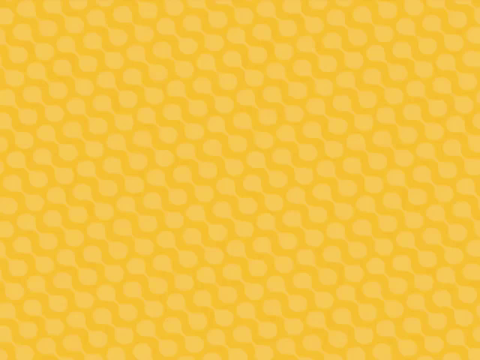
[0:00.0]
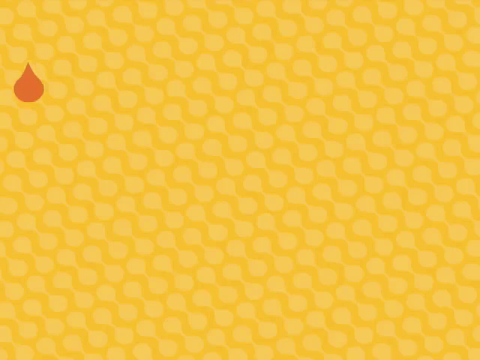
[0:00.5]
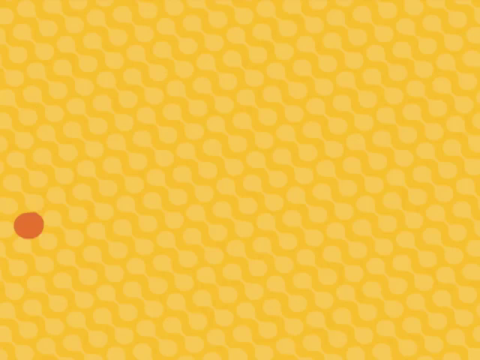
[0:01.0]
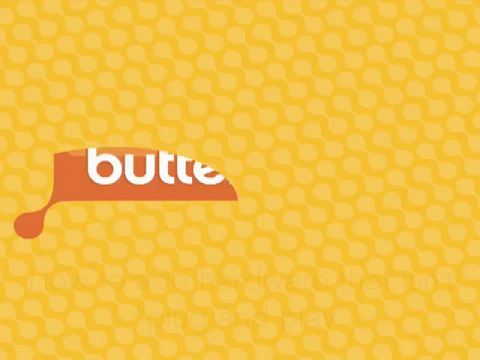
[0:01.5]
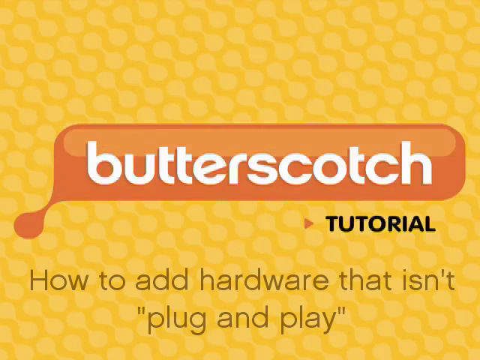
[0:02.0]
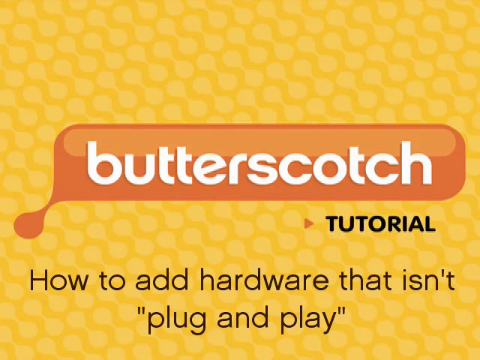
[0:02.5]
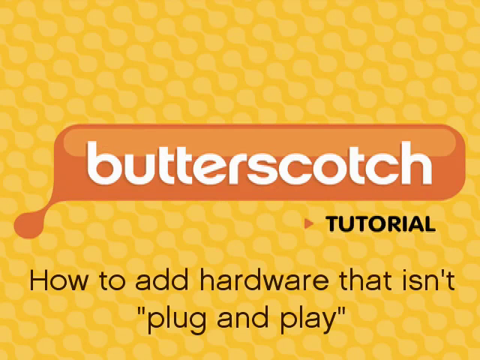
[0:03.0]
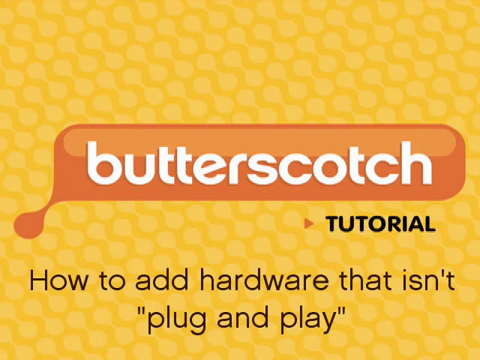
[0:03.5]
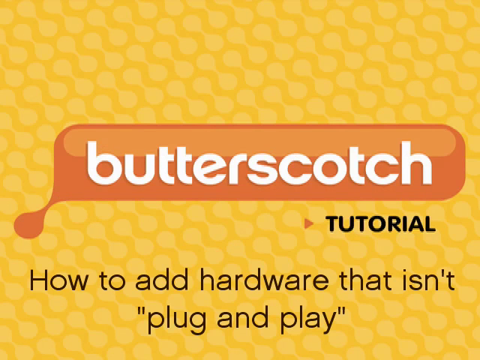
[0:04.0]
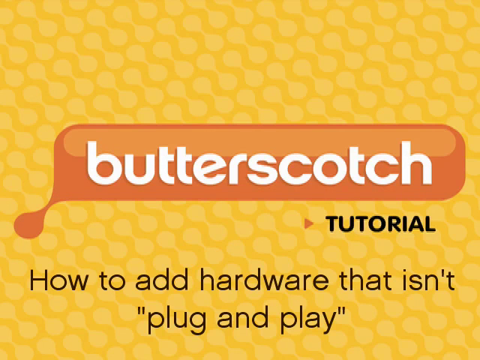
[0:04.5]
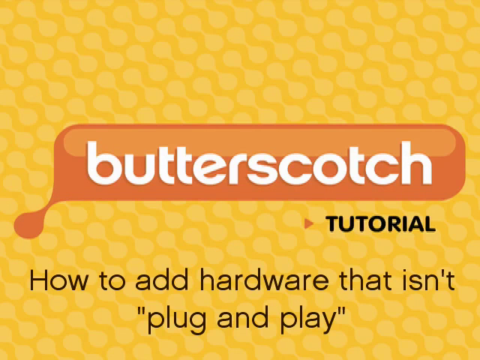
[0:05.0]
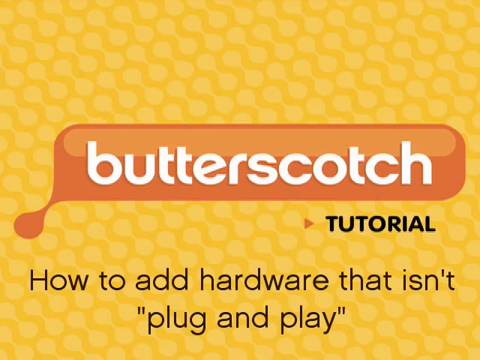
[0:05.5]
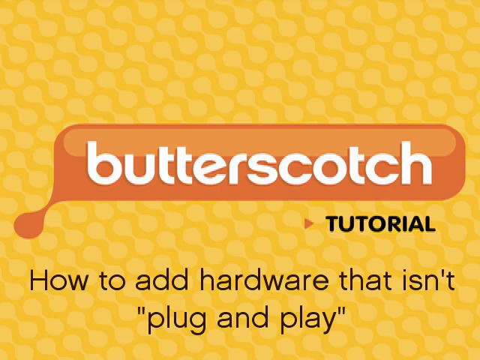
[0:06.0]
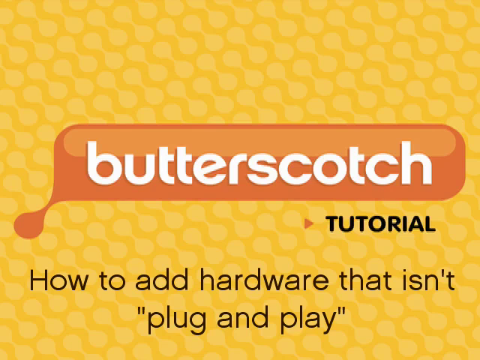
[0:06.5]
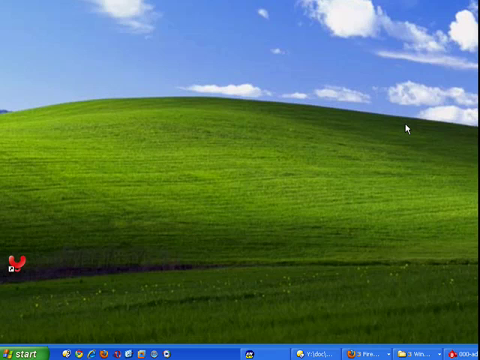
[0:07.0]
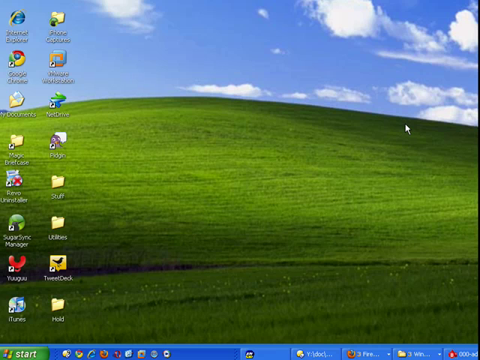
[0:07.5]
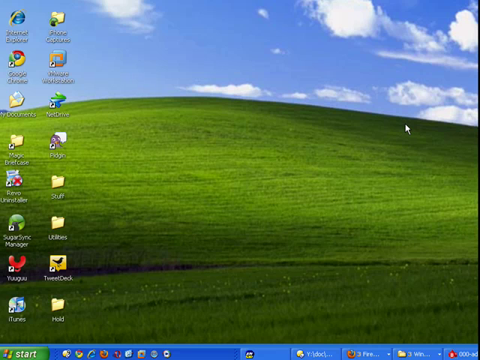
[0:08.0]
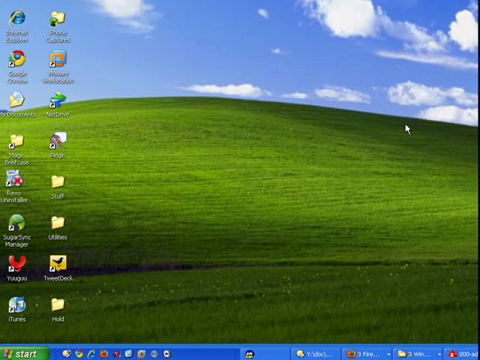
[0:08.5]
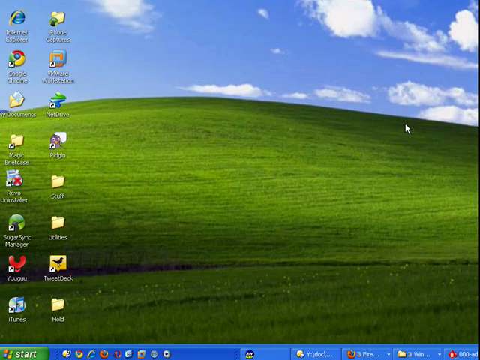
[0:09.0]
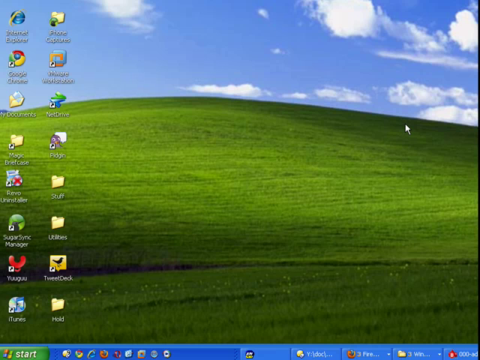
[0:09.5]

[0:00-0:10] A website is shown. A little tan drop comes down against a yellow background, and when the drop hits the ground, text comes up reading "butterscotch tutorial how to add hardware that isn't plug and play." The video stays on this. A background of a green hill of grass is shown. There is also a honeycomb background that is all yellow, covered in little honeycomb shapes that are kind of like undefined circles; it is very bright and very colorful. There is a tutorial, with a little arrow showing it can be clicked. The icons on the left-hand side are vaguely visible, along with the background of honeycomb shapes all put together.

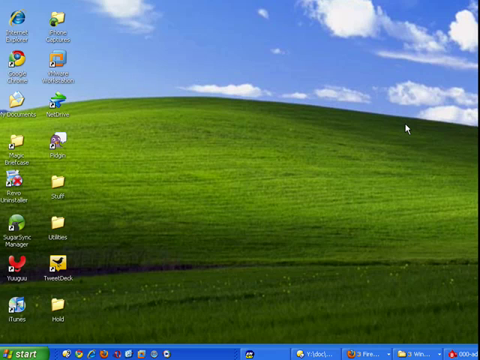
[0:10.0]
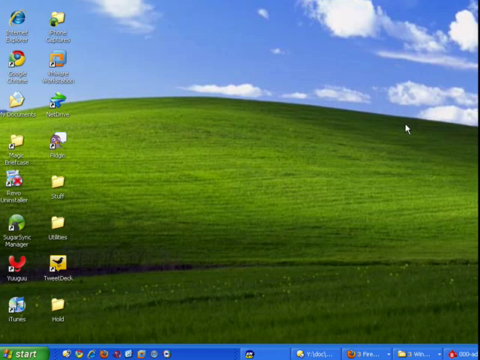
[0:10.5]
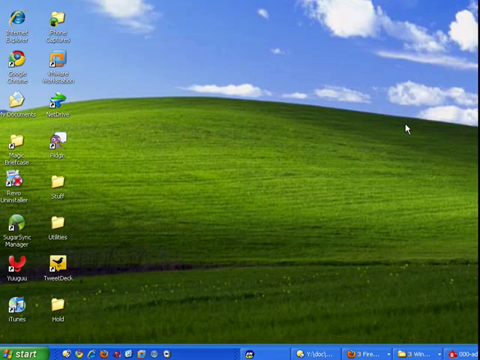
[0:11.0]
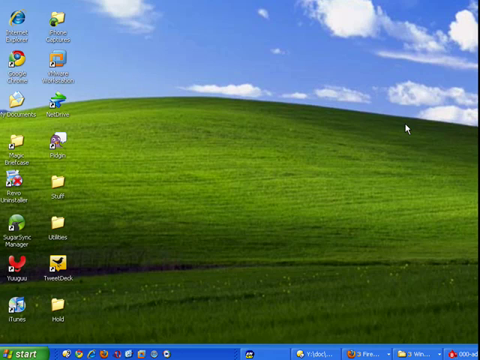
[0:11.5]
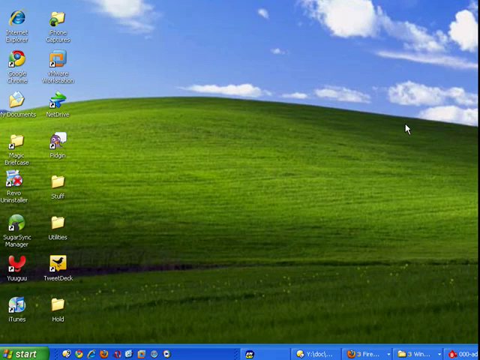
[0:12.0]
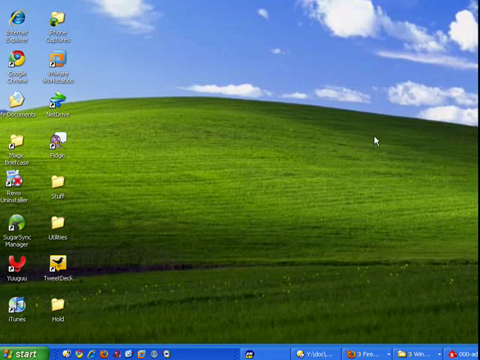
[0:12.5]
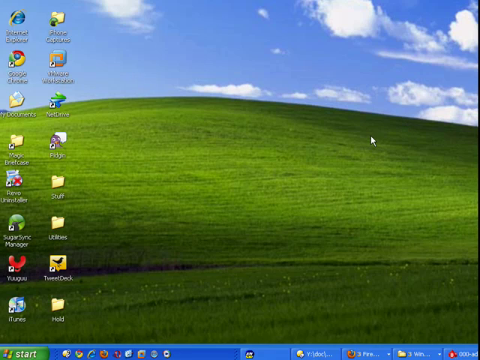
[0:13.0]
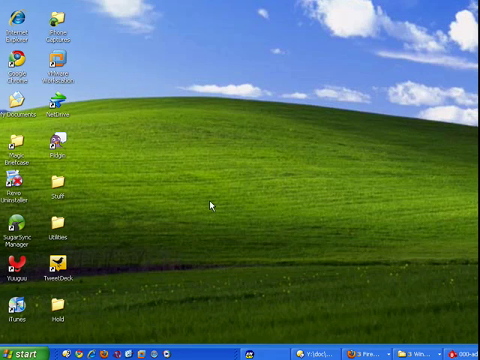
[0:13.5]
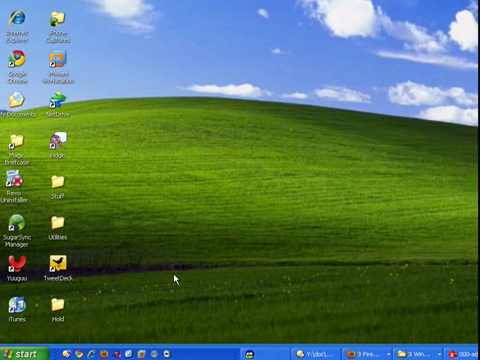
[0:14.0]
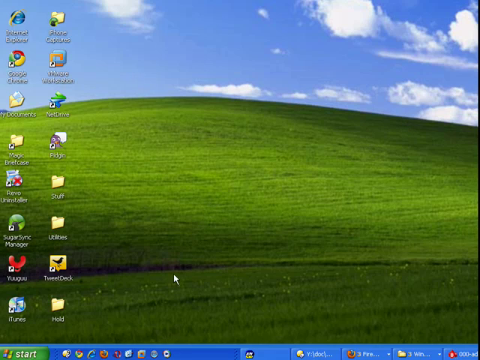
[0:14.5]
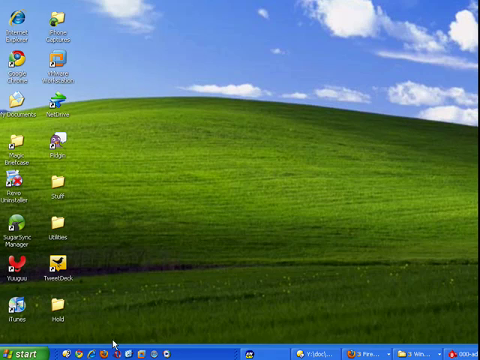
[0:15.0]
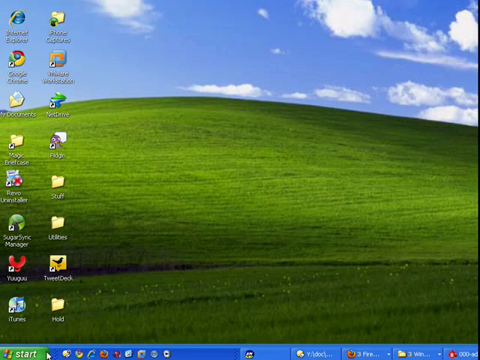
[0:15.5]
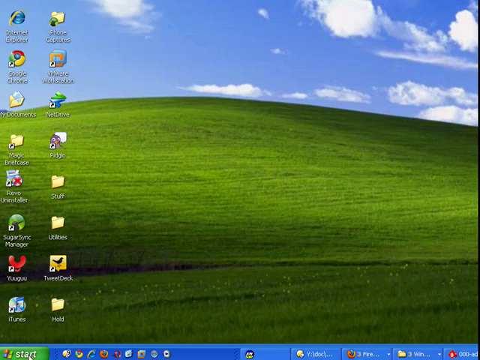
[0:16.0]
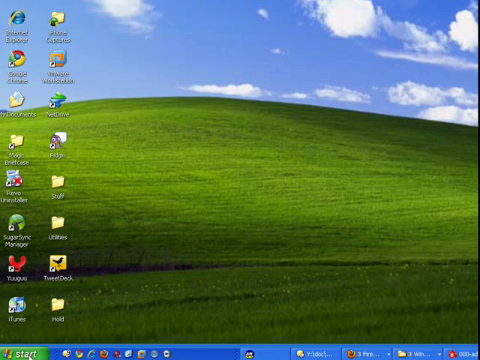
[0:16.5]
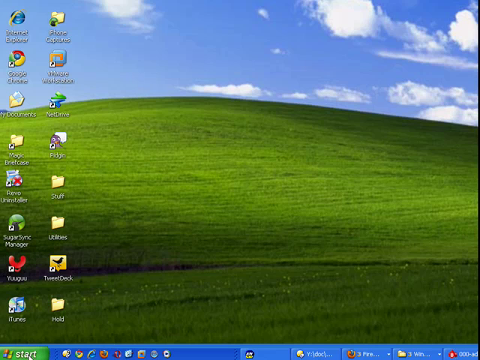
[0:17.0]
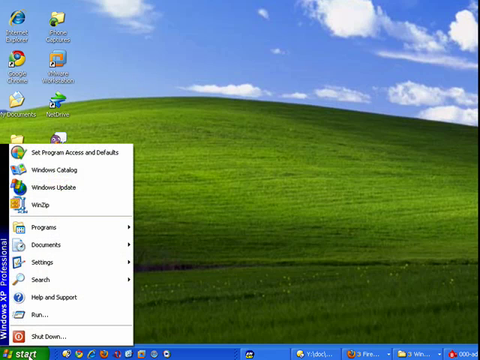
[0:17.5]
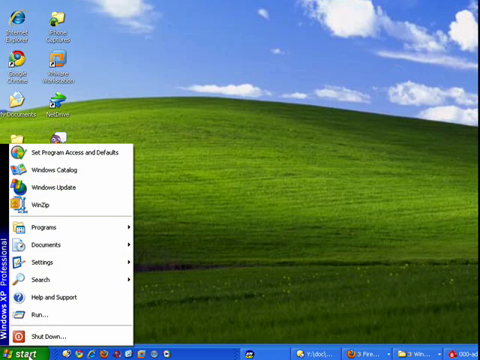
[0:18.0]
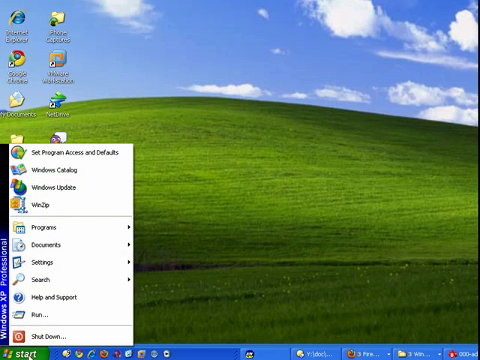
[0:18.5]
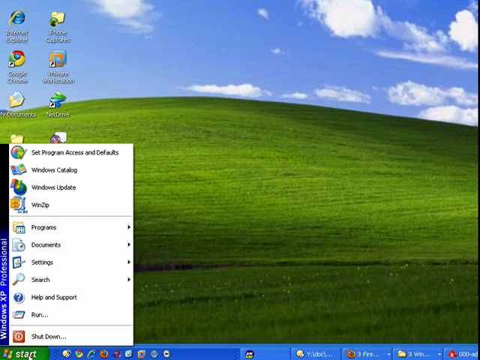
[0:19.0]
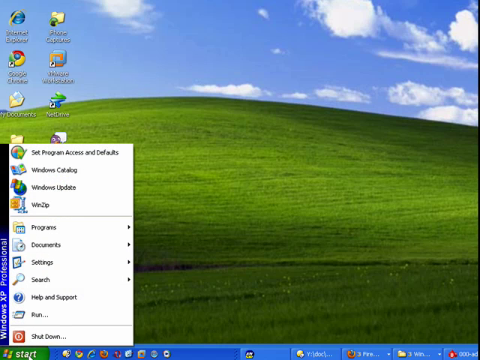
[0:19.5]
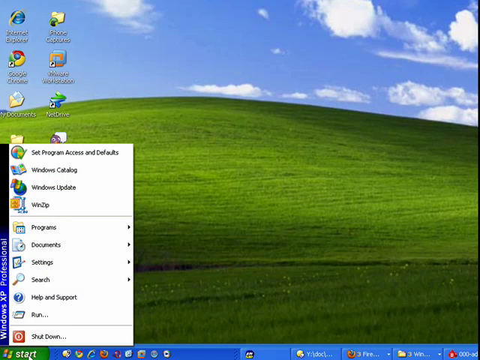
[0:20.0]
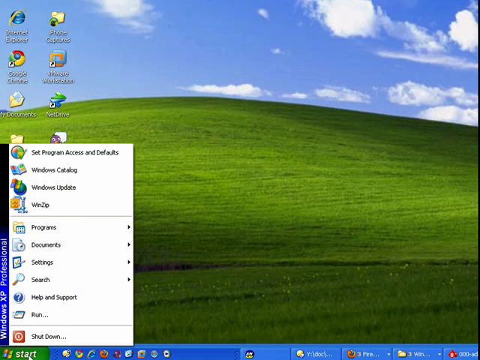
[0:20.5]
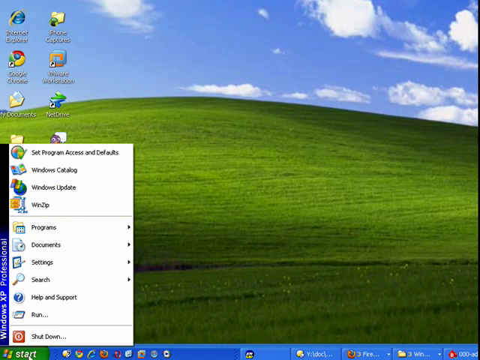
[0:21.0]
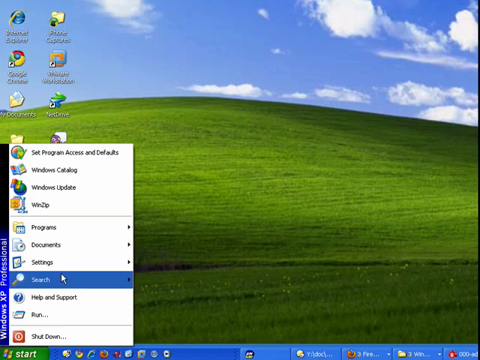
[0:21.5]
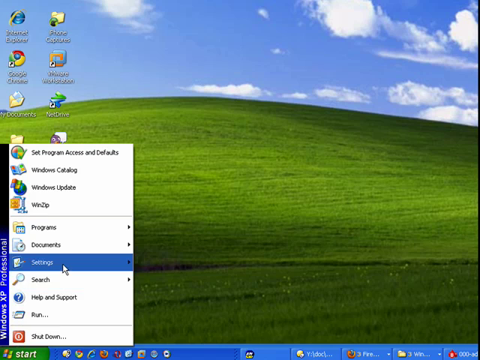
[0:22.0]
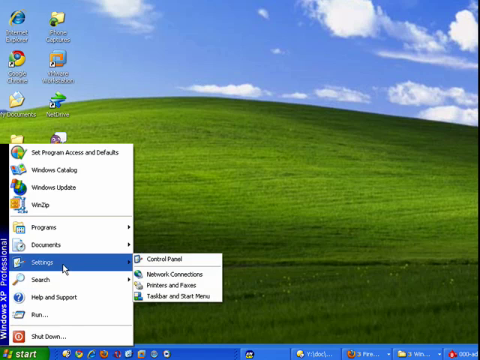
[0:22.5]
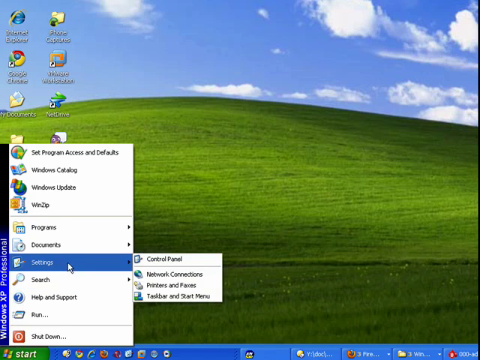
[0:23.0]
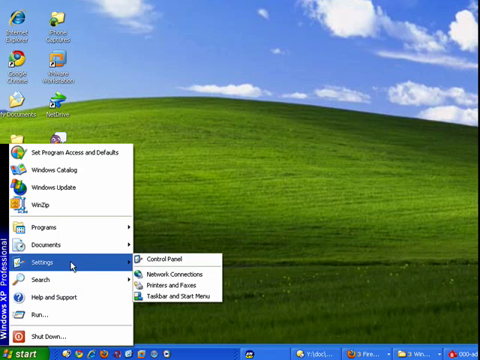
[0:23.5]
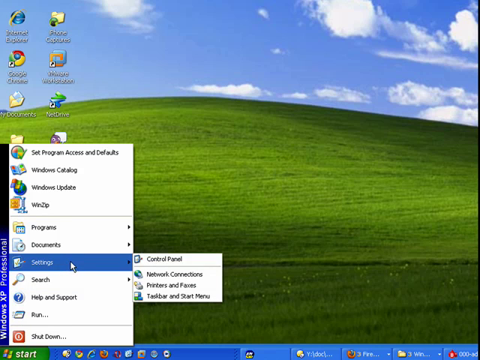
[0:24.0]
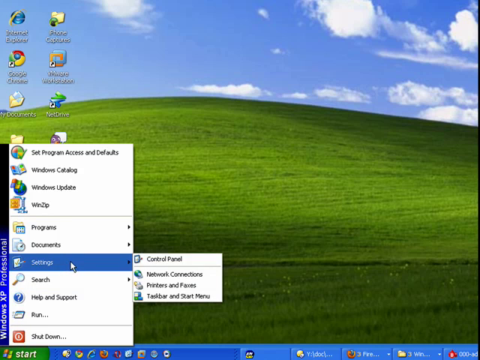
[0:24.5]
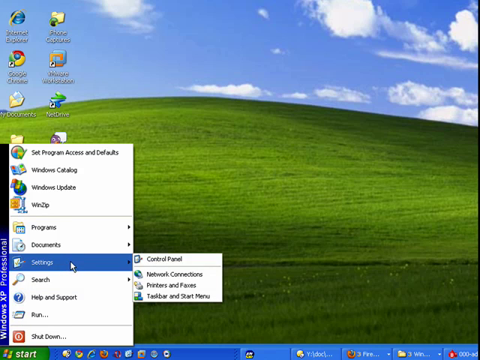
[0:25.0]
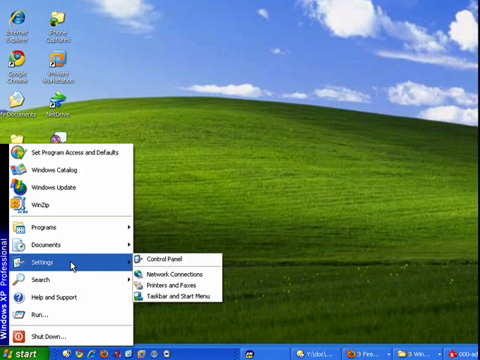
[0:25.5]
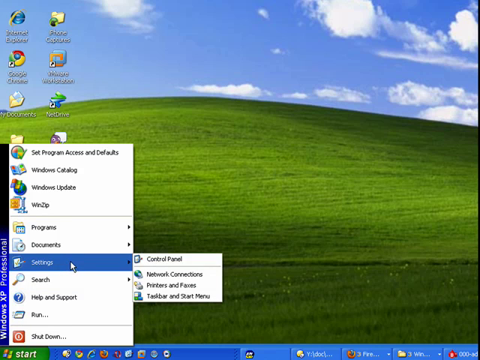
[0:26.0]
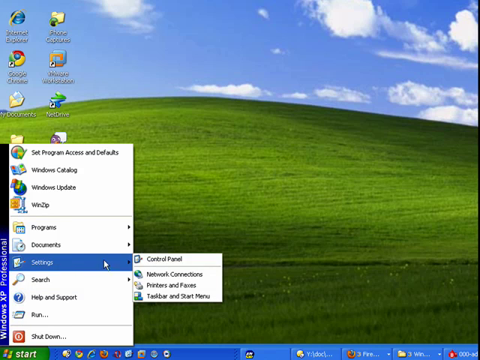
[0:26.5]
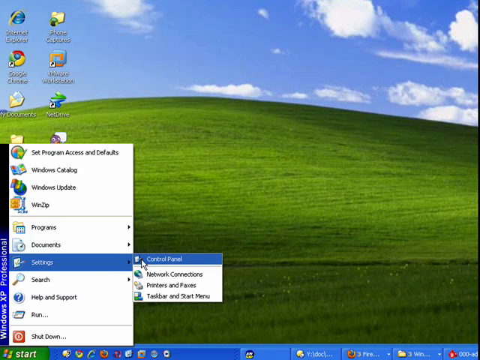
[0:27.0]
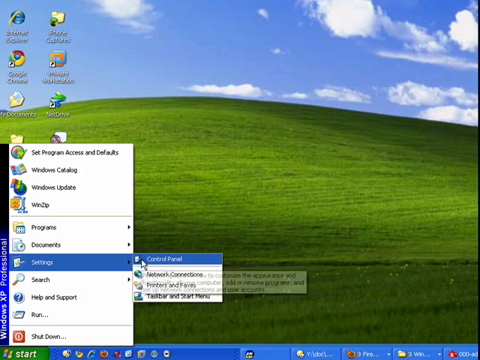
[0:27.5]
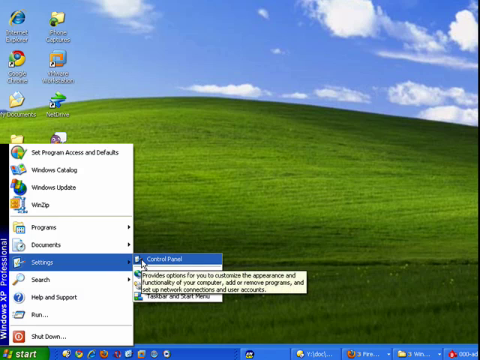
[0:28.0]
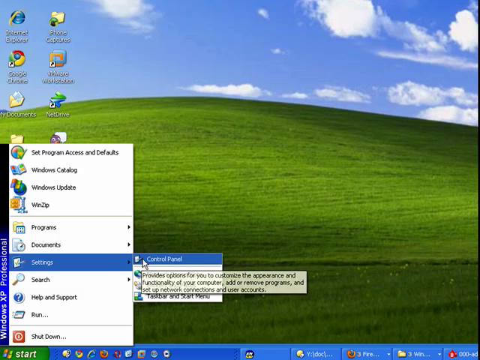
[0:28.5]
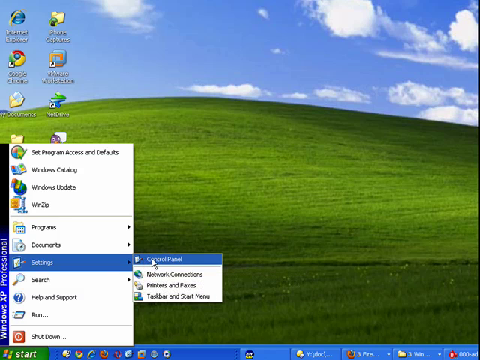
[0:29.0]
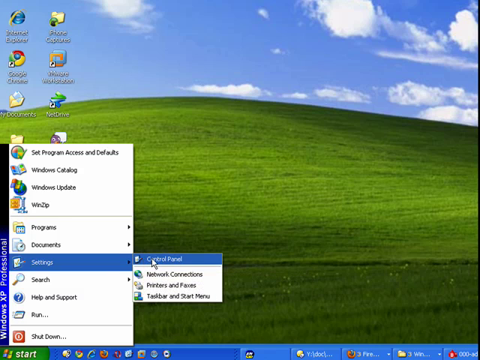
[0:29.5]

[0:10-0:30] A website with icons on the left shows a big hill full of green grass. A cursor is on the screen, and suddenly a pop-up appears. Settings is clicked and a further pop-up appears; another category is clicked, and then both boxes disappear, leaving the green grass on the hill. The sky is very blue with sporadic clouds. The sequence repeats, showing the pop-up and settings and the control panel being clicked, and then the same webpage as it first opened. There are double rows of icons on the left-hand side. The cursor stops at the top of the hill, pointing upward at the sky, where there are big puffy clouds, and there is shading on the hill, with part of the grass a darker green.